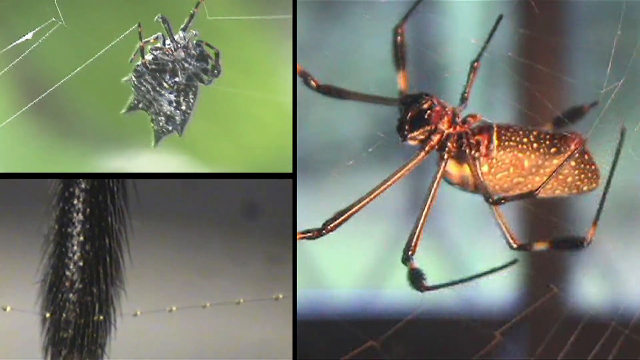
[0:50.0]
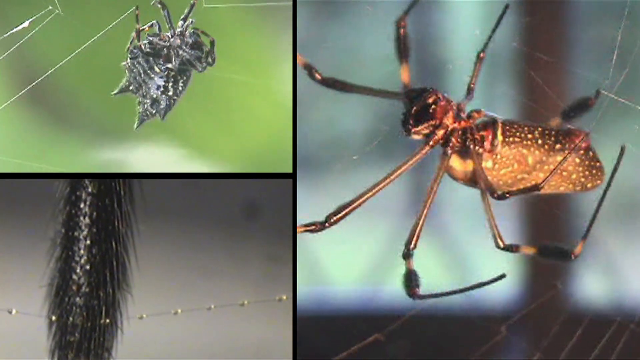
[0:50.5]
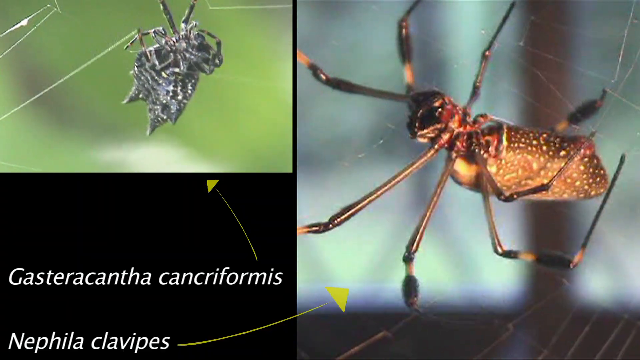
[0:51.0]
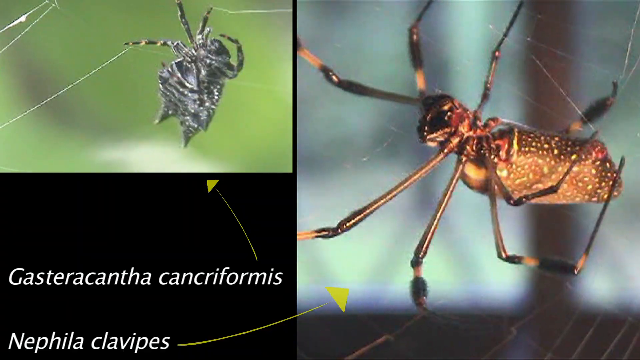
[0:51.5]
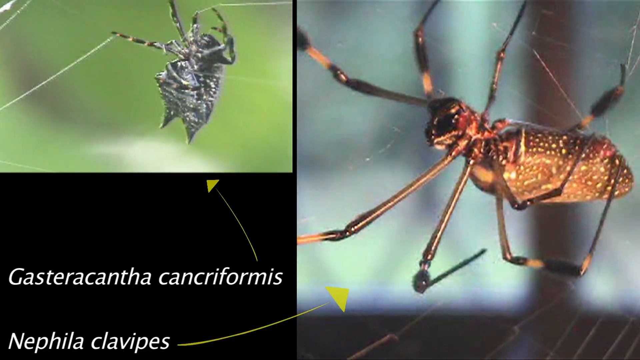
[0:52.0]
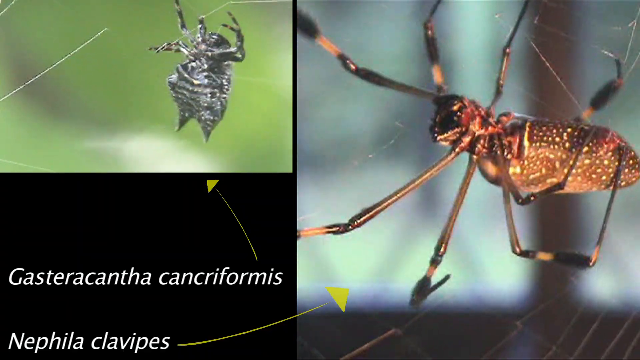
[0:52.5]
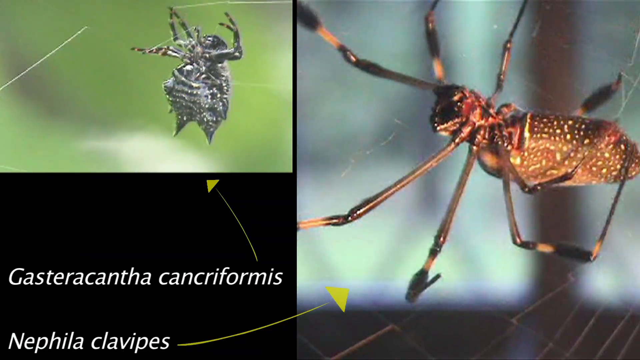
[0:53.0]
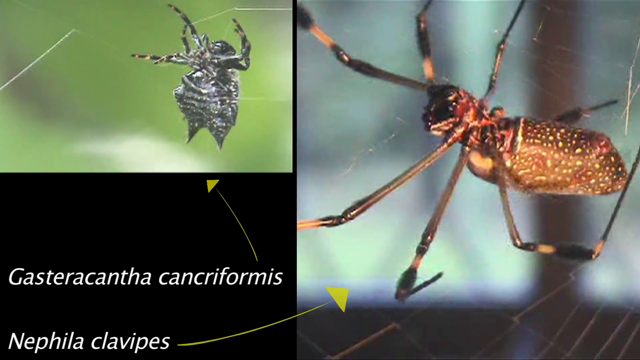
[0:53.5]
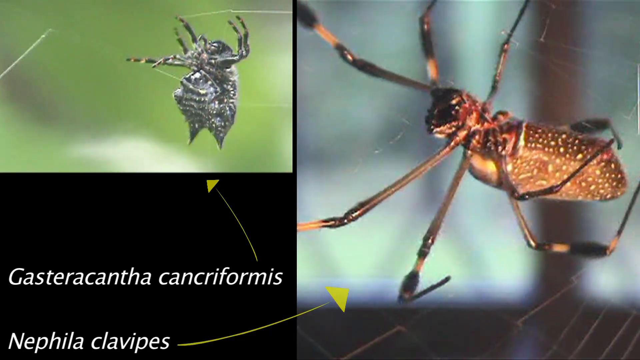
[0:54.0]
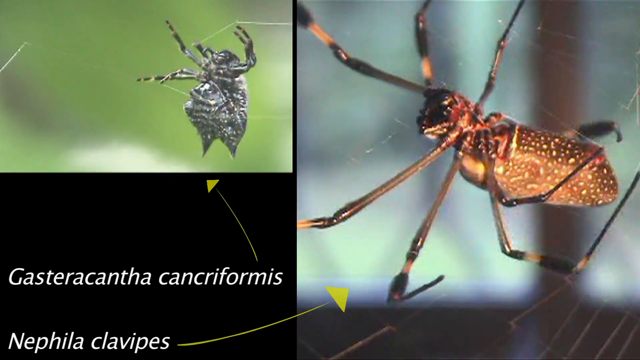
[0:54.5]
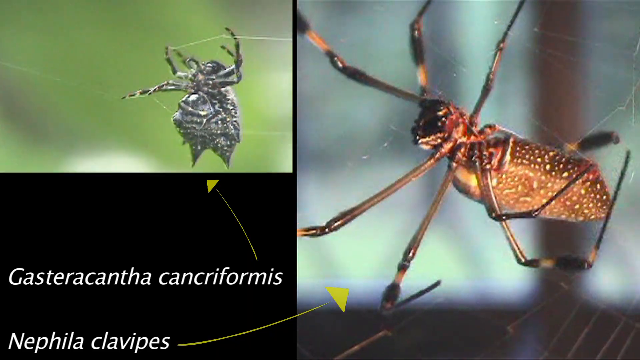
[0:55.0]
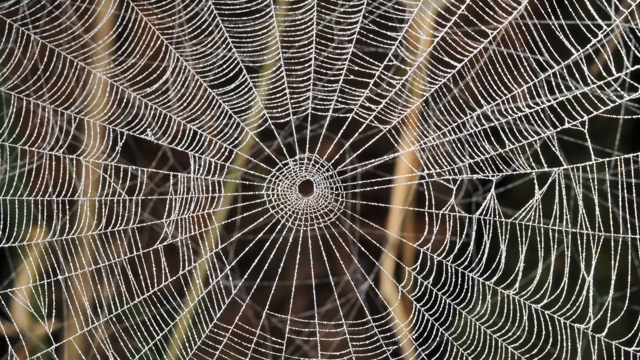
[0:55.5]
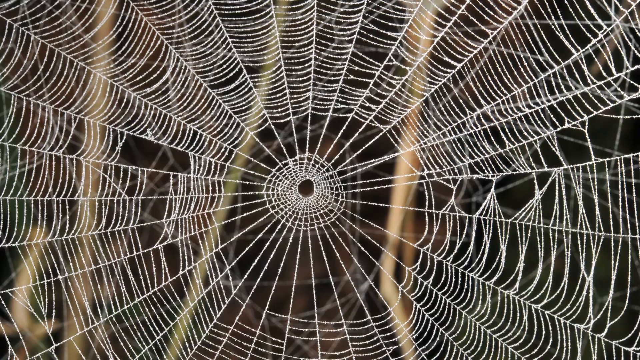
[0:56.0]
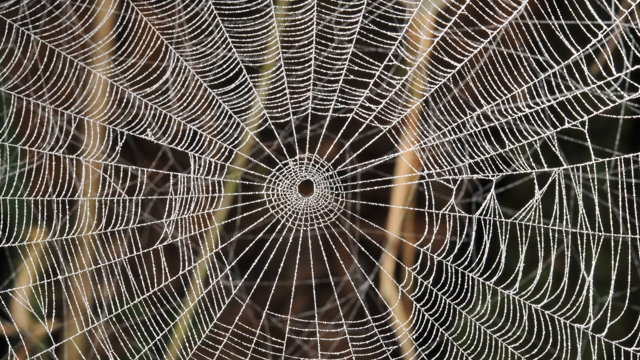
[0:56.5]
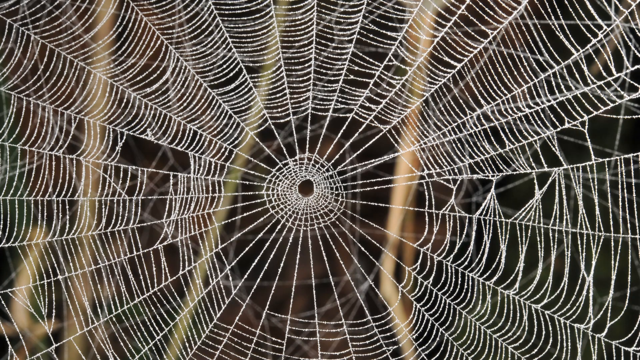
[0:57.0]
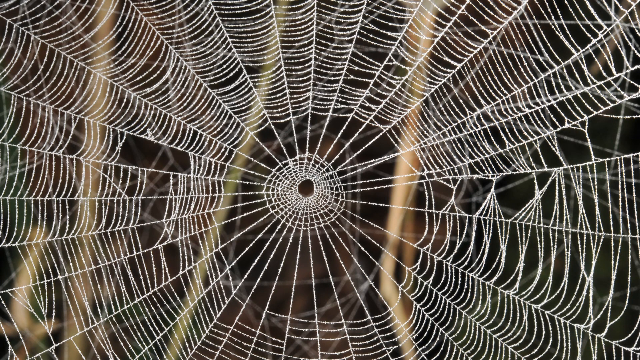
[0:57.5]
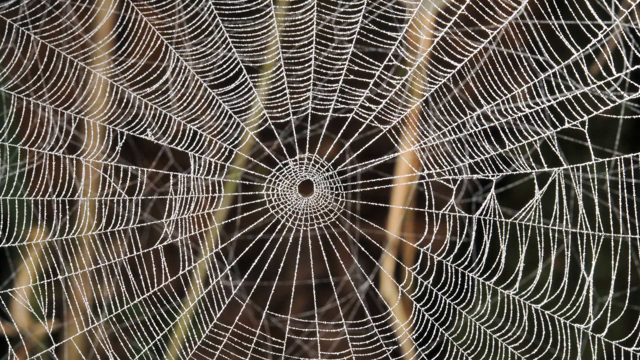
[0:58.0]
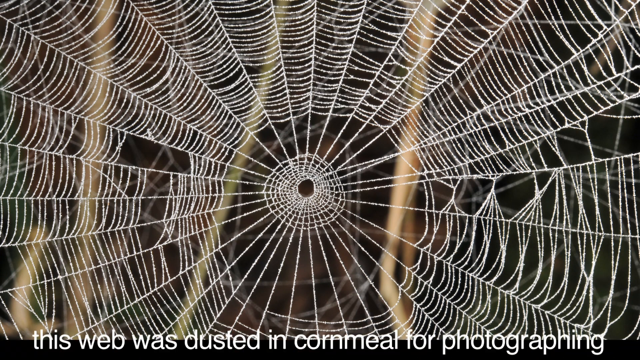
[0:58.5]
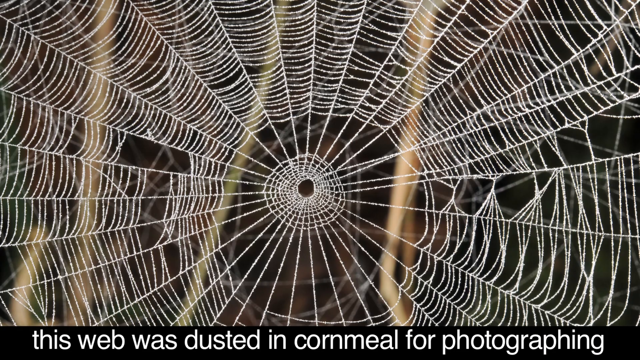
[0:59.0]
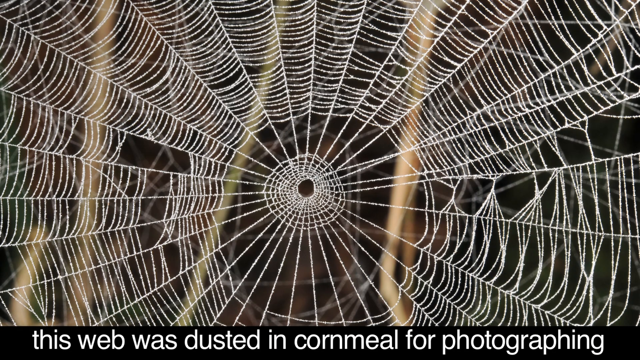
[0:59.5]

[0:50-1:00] Three pictures are on screen: one at the top left, one at the bottom right, and a full one covering the whole right side. They show spiders spinning a web and a full, very intricate and symmetrical web spun by a spider. The spider in the upper left-hand corner is black and gray, while the spider on the right side is brown with speckled yellow or beige dots, and its legs look brown and black. In the lower left-hand corner is a very large word, probably the scientific name, "gastrocantha cancriformis".